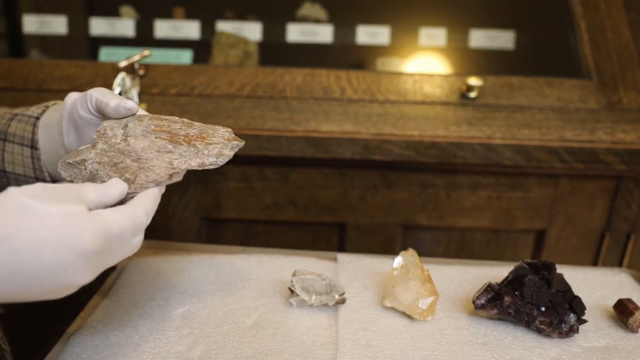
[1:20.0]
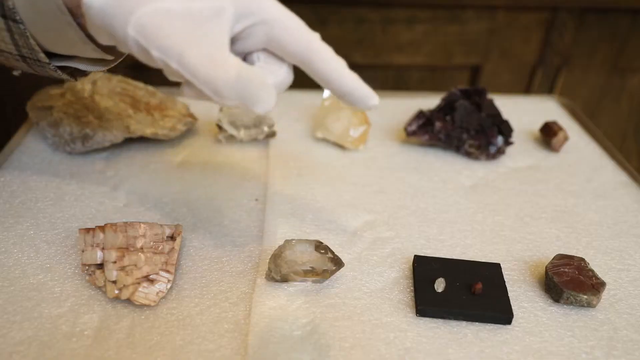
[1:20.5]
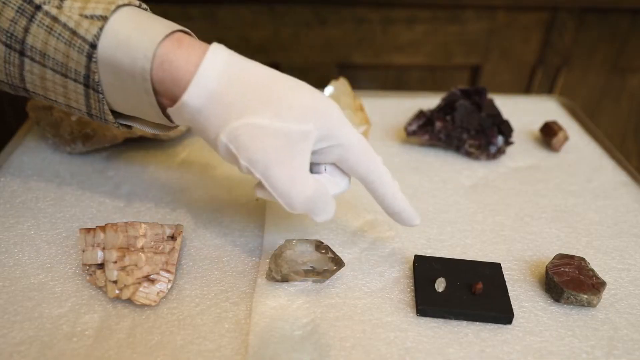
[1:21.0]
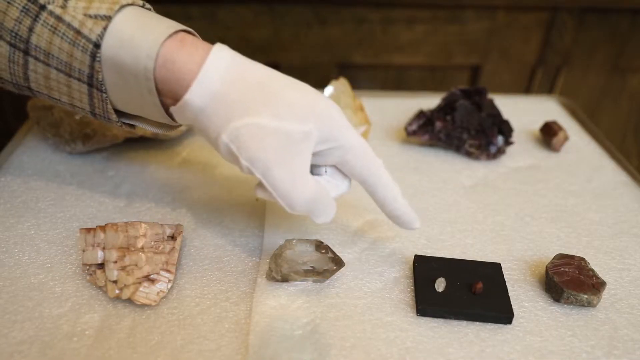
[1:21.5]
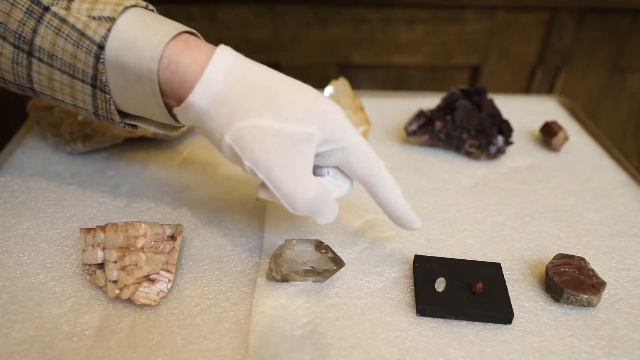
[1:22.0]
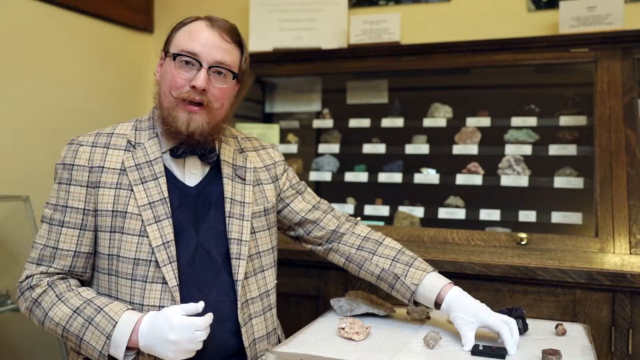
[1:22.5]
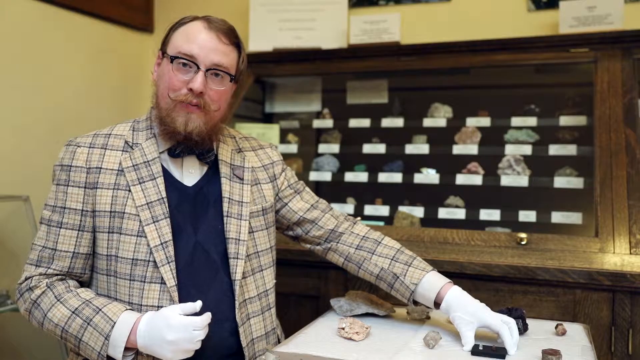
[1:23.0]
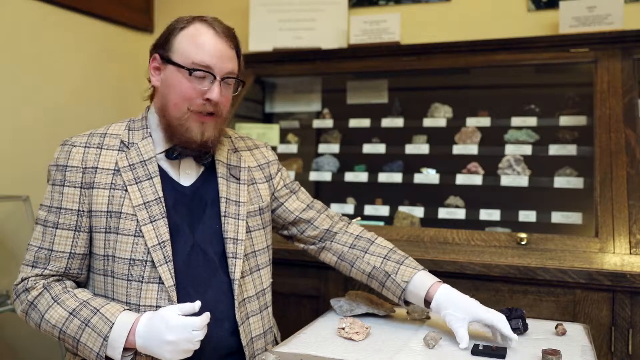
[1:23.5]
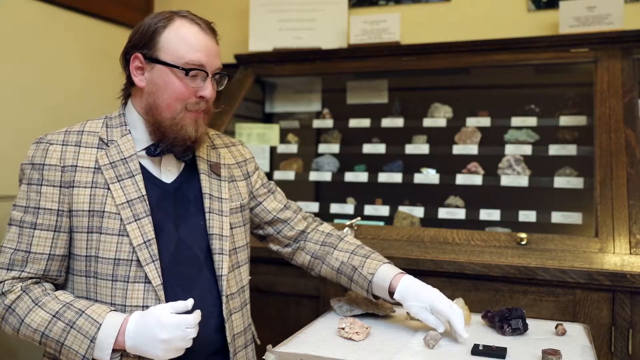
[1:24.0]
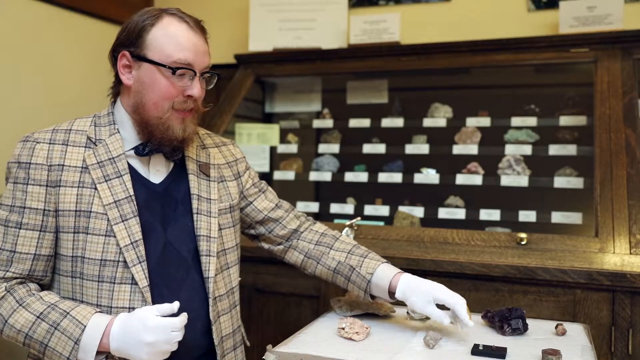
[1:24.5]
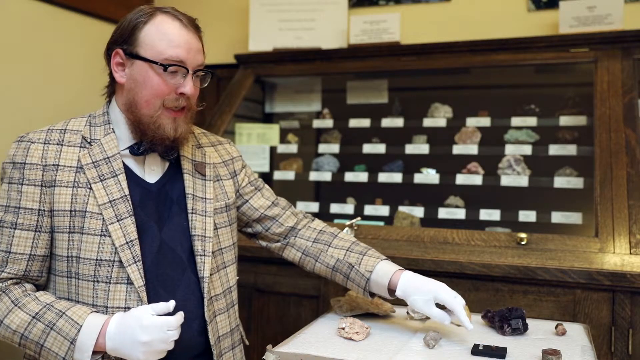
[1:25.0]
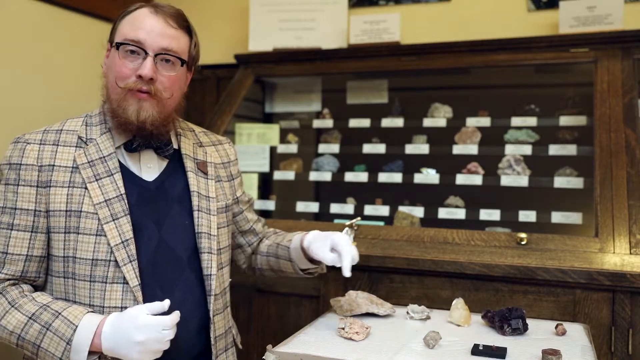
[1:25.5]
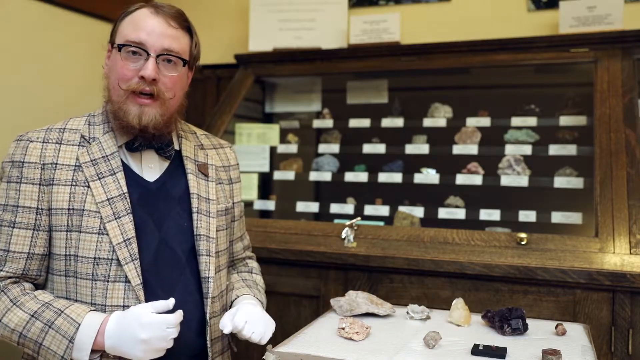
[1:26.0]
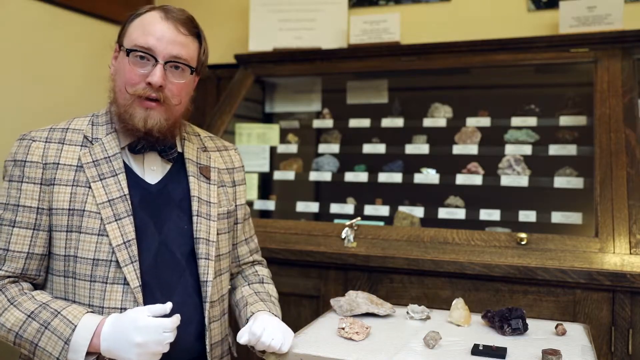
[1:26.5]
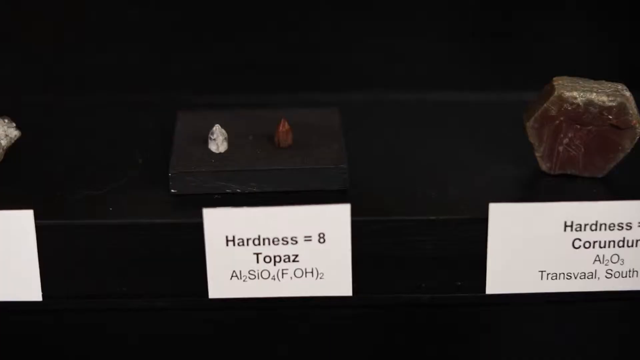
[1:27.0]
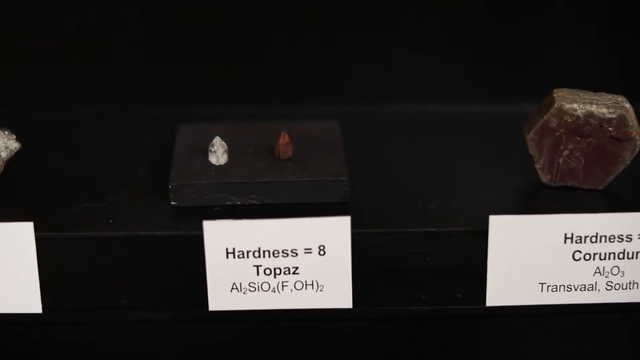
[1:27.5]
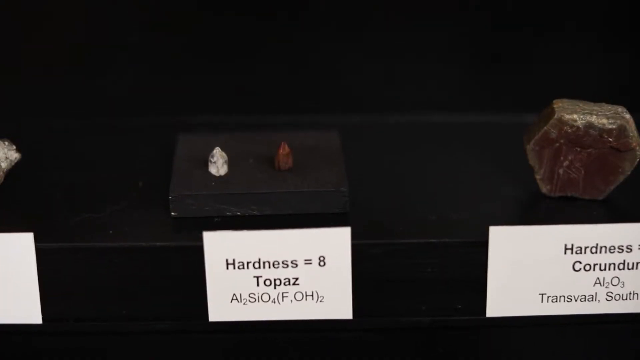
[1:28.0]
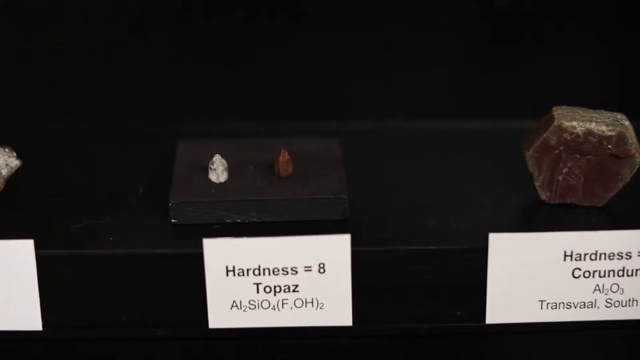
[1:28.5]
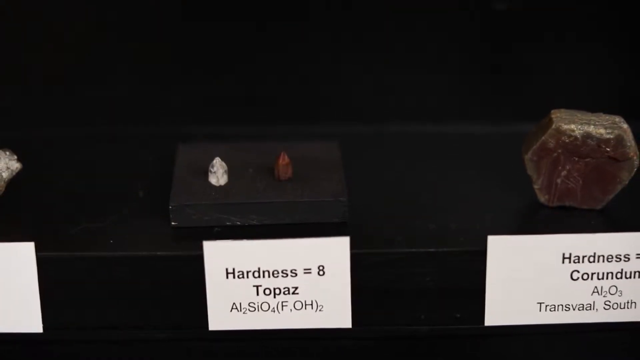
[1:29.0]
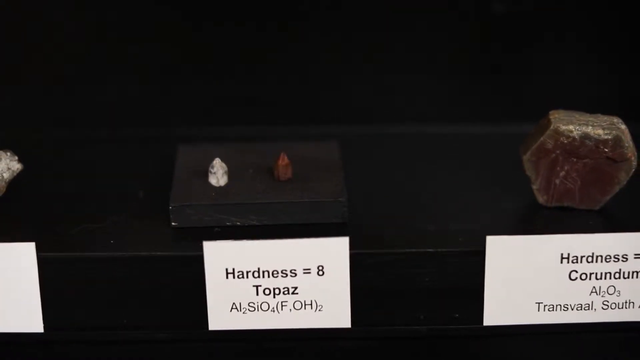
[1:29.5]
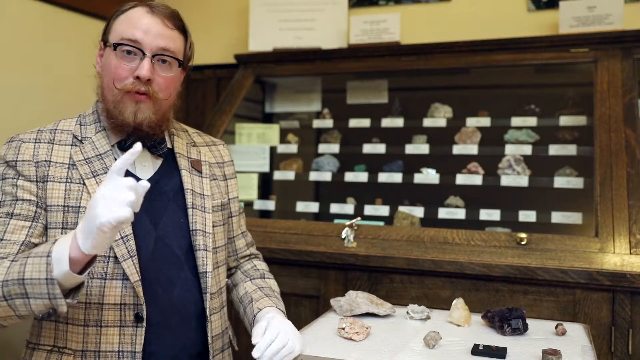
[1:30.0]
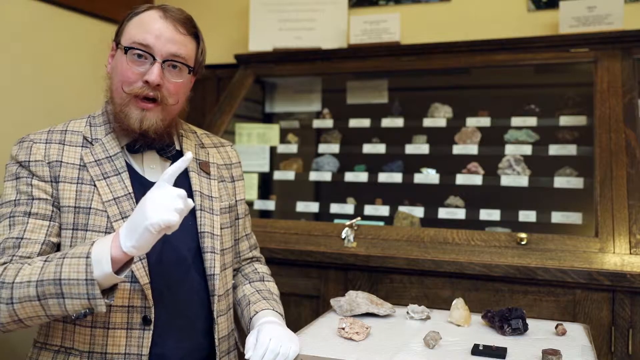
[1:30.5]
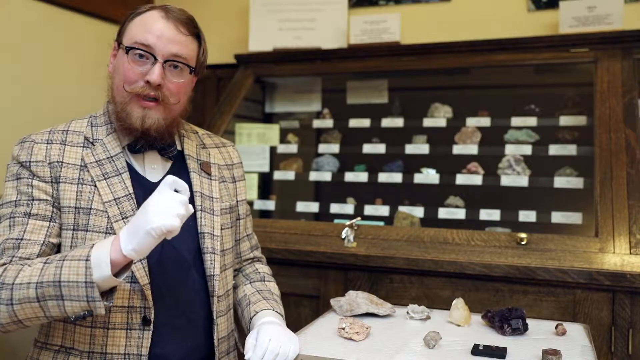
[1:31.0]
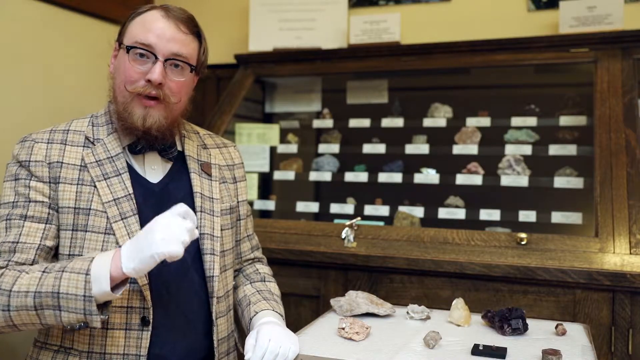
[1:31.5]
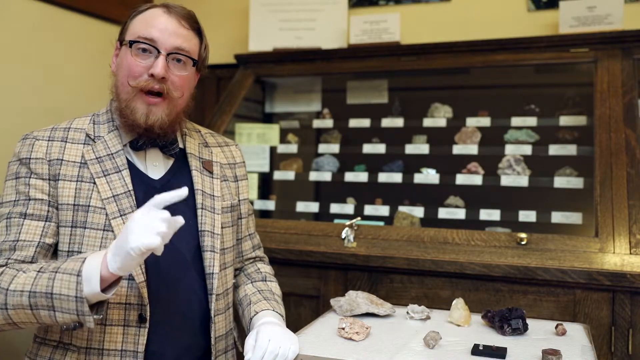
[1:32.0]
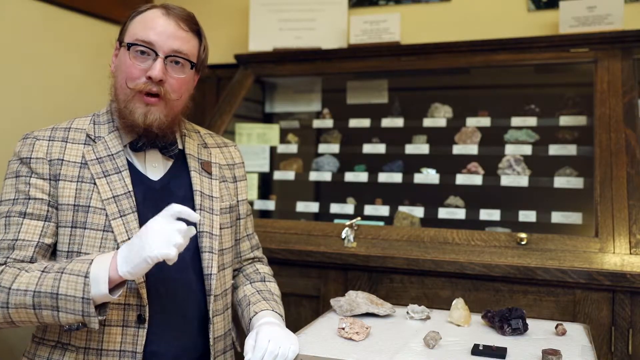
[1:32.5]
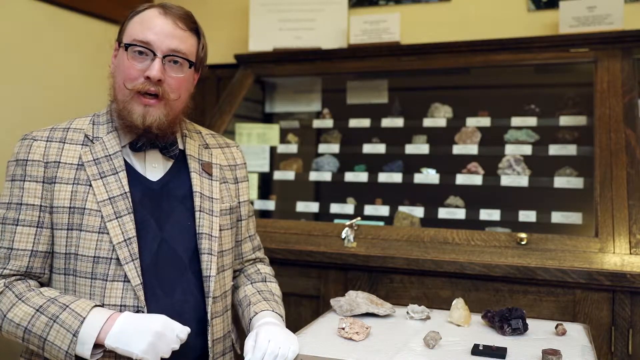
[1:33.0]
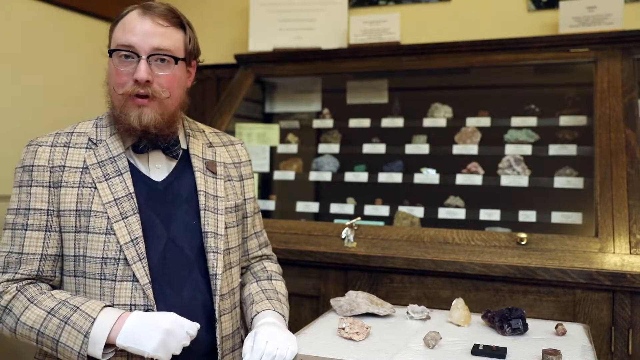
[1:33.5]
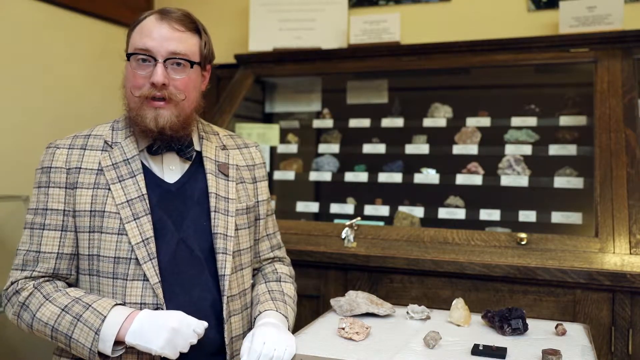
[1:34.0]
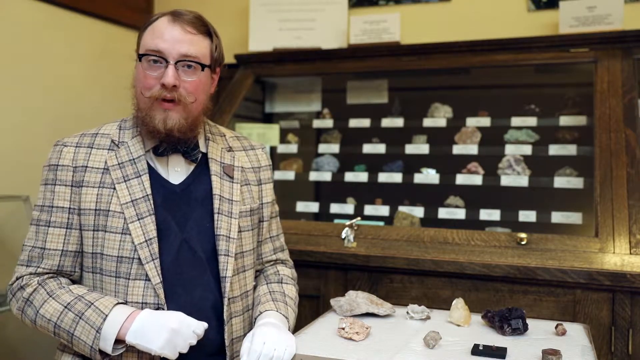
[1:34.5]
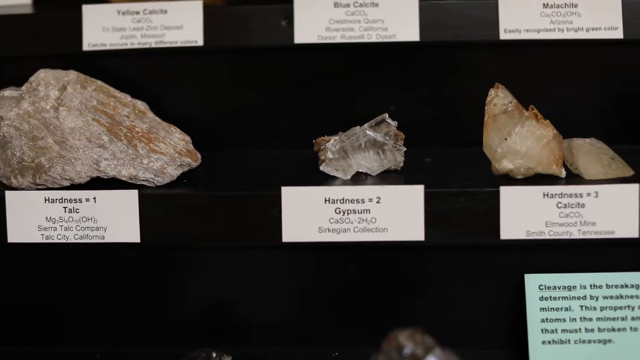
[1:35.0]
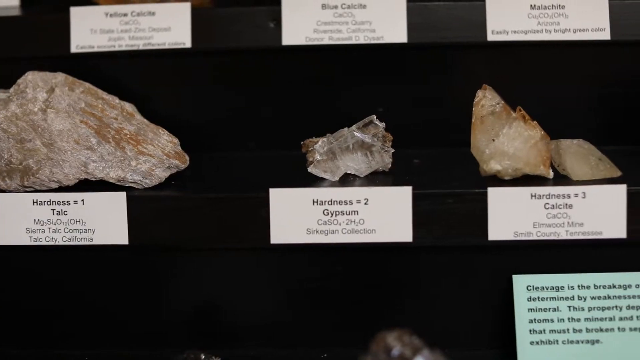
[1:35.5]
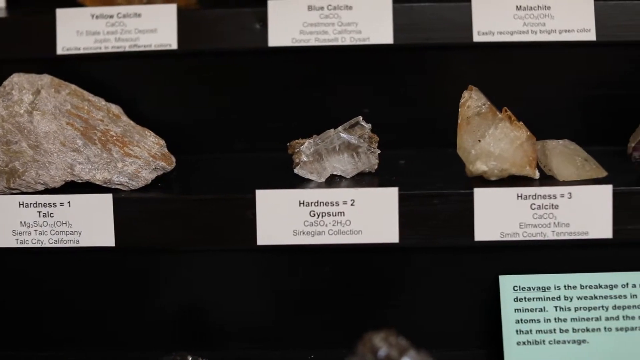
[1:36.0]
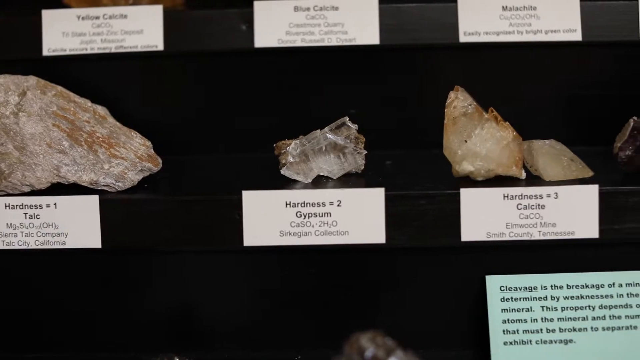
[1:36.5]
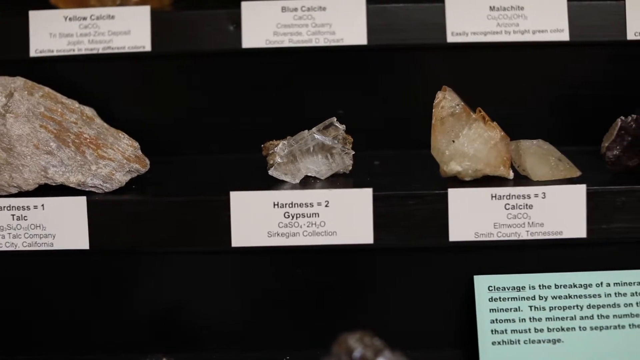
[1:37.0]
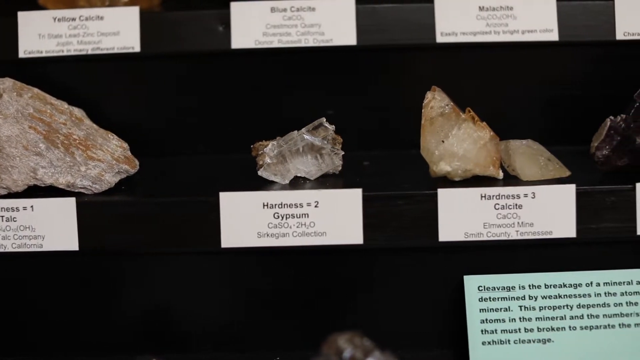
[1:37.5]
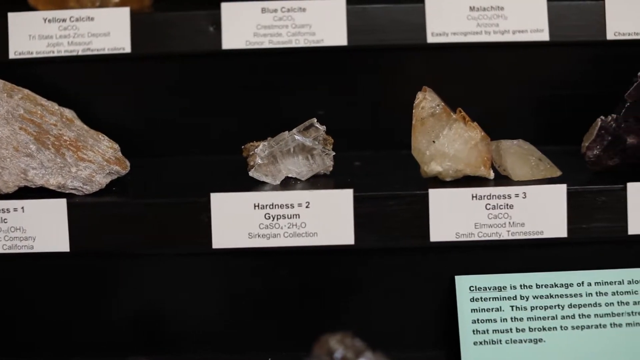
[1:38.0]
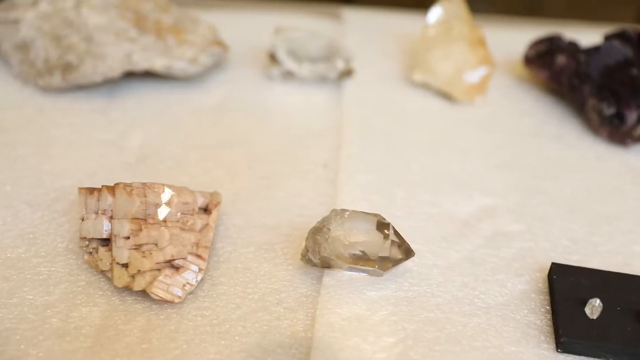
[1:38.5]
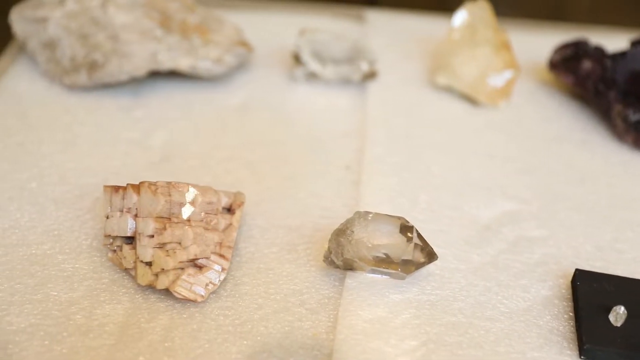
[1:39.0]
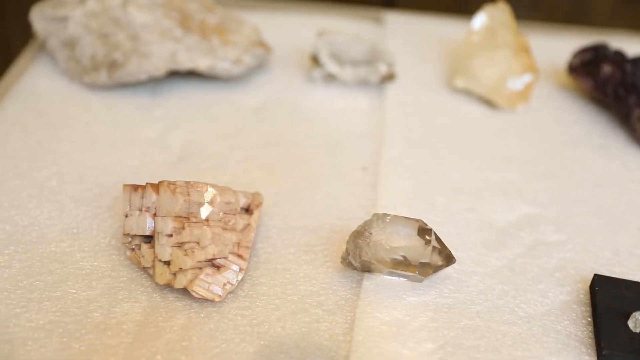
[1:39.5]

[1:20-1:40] The curator, Garrett Barmore, has picked up the rock sample from the top left of the trolley: an irregular, somewhat oblong, dirty white sample with brown streaks and no clear shape. His two white-gloved hands hold it on the left of the frame, and he turns it over slightly. The scene shifts back to the trolley, where he points at the third sample from the left on the bottom row, a black square of material with two small crystals, one clear and white and one reddish. The scene returns briefly to him talking and waving his hands, then changes to a display of samples in a museum case with a black background. A small black slab holds two smaller rocks: a clear white crystal on the left and a reddish brown crystal on the right. Beneath them, a white card label has three rows of text: "Hardness = 8", "Topaz", "Al~2~SiO~4~(F~2~OH)~2~". On the right of the frame is another sample, a hexagonal slab of reddish rock, with its card partially visible reading "hardness", "Corundum", "Al~2~O~3~", "Transvaal south". A small sample is partially visible on the left of the frame, with just the edge of its white description card showing.